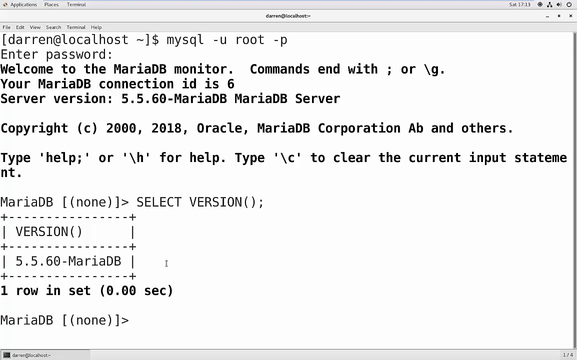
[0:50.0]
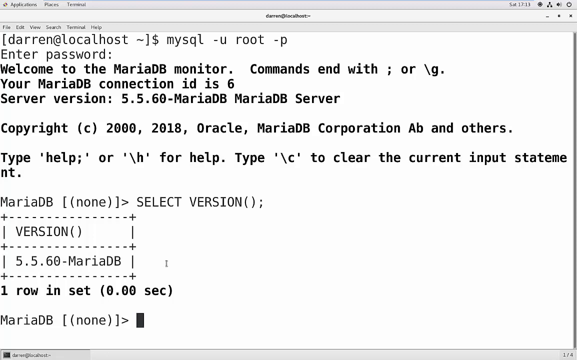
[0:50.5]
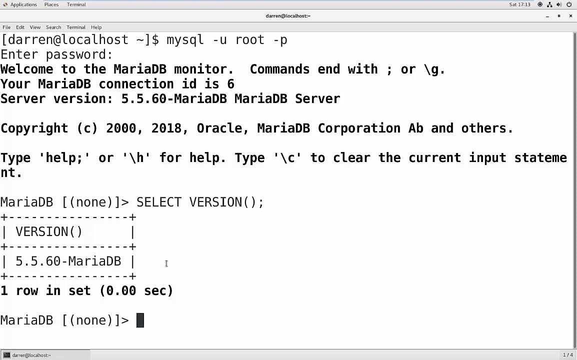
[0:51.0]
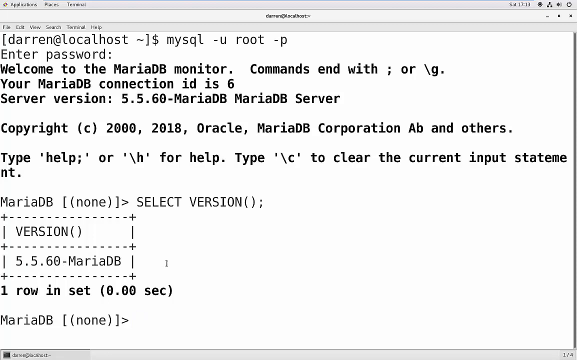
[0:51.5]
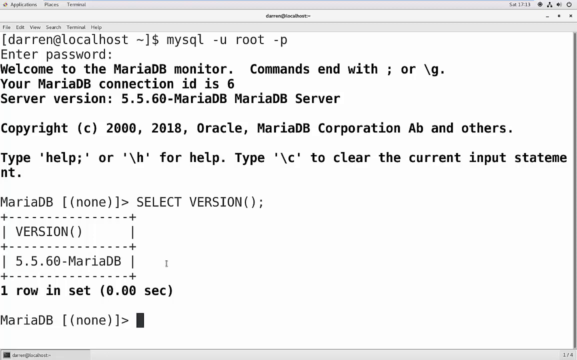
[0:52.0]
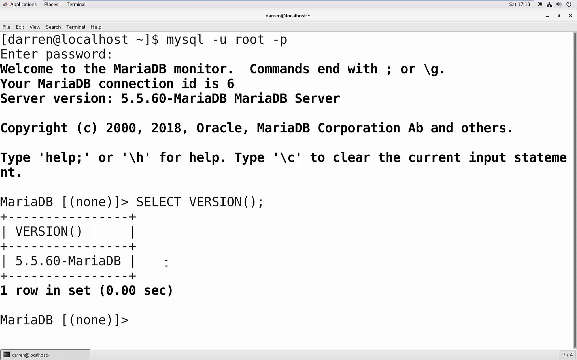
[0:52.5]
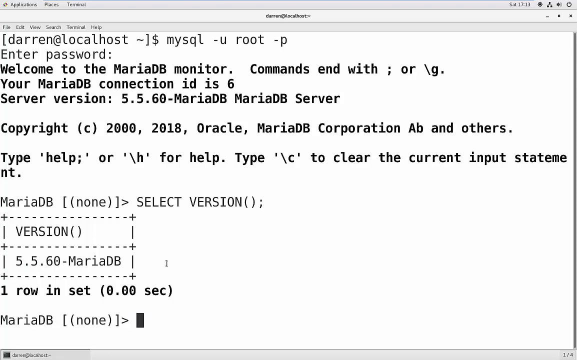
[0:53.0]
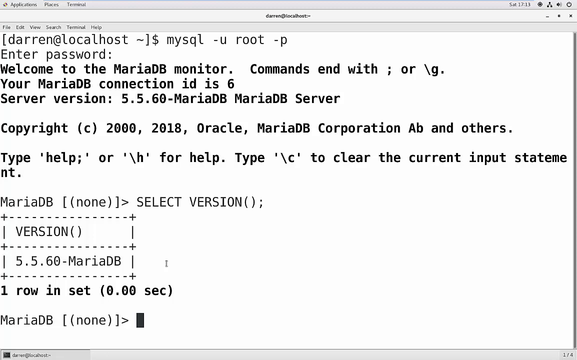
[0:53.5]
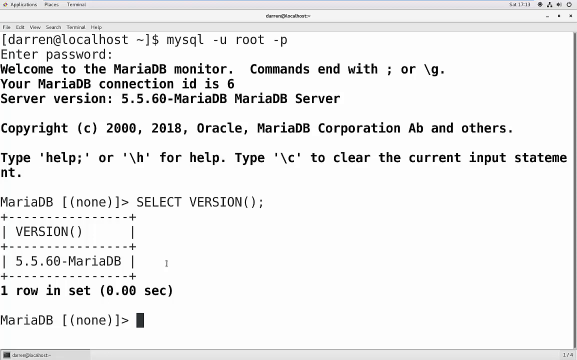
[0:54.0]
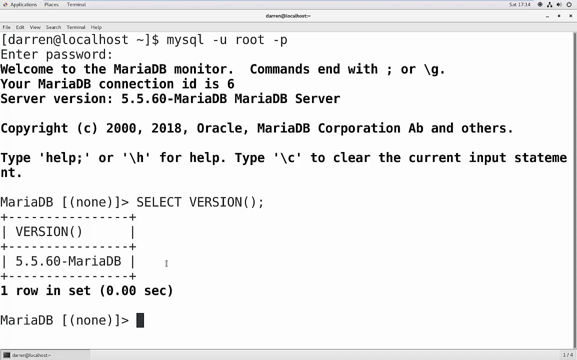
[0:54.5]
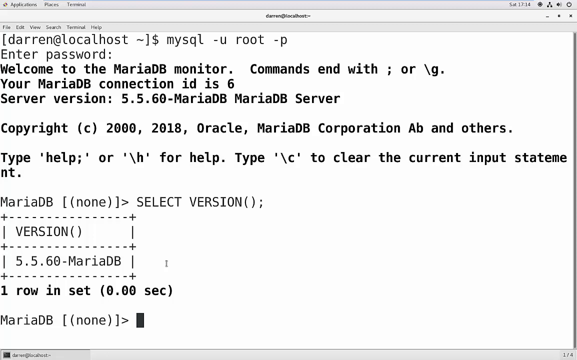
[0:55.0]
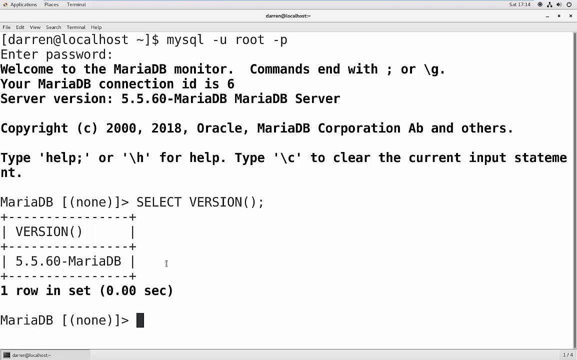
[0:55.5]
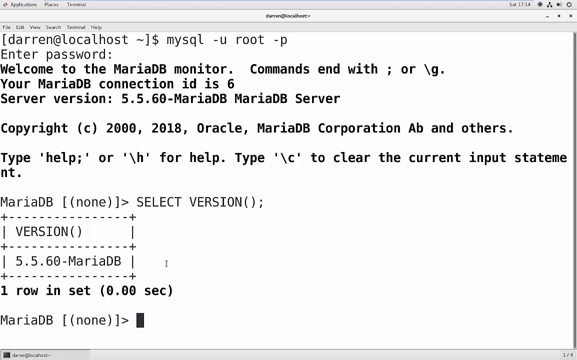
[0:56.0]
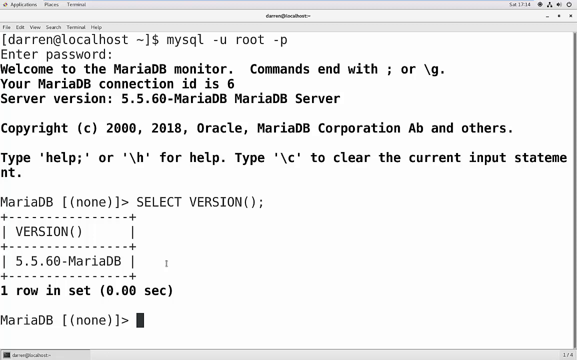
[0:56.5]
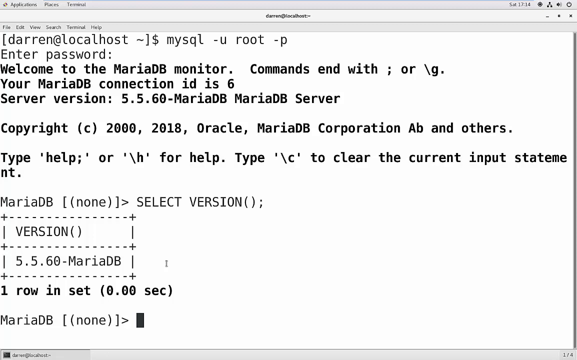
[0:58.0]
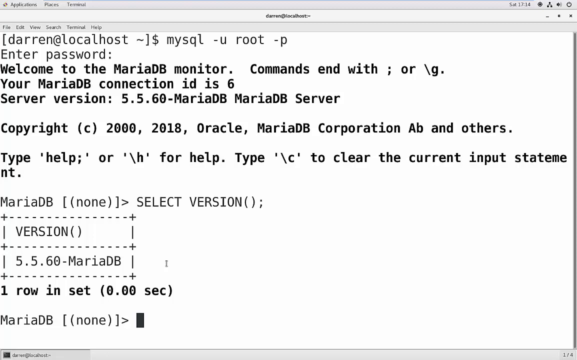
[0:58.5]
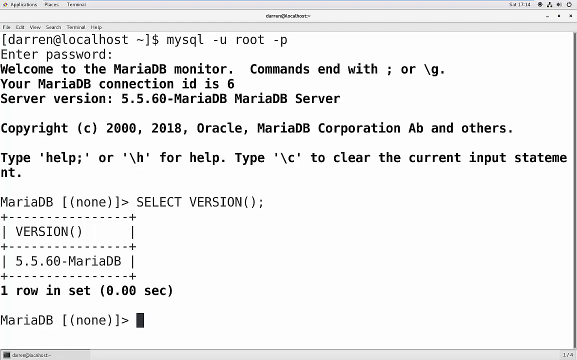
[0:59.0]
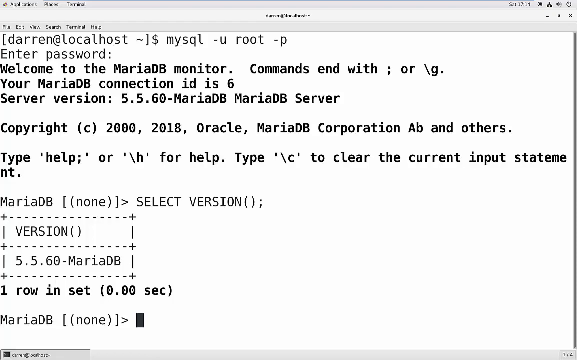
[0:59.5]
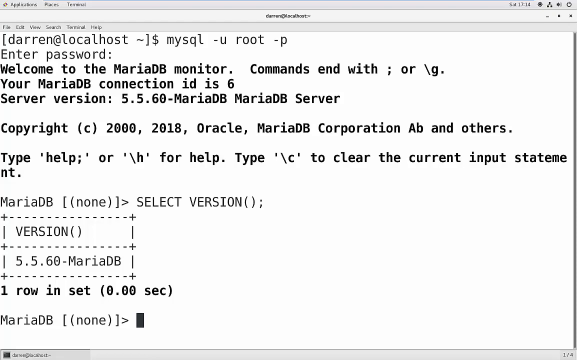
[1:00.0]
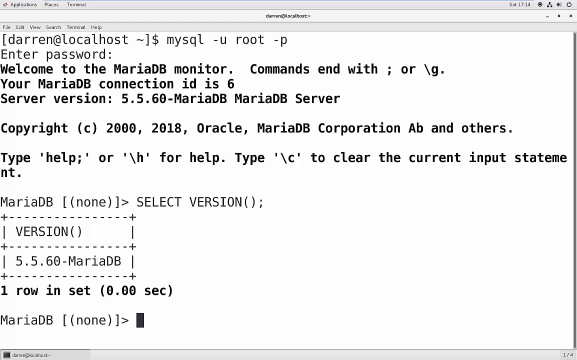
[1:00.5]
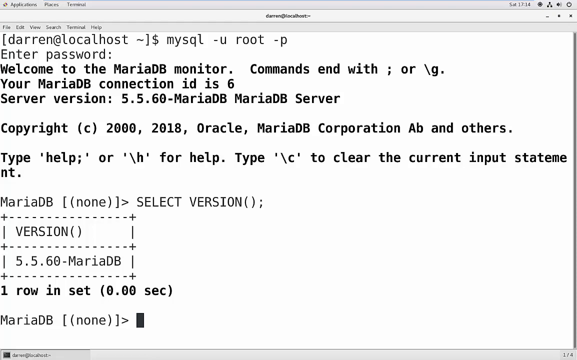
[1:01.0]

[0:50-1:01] The text continues, stating that there is a row and a set, and that the computer took zero seconds to find it; there is only one row. The screen is still Darren's localhost initial page where he is coding, apparently in Python. The version of Maria's monitor is shown as 5.5.60. Little else happens; there are still Darren and Maria, but Maria is not actually present, only her monitor.